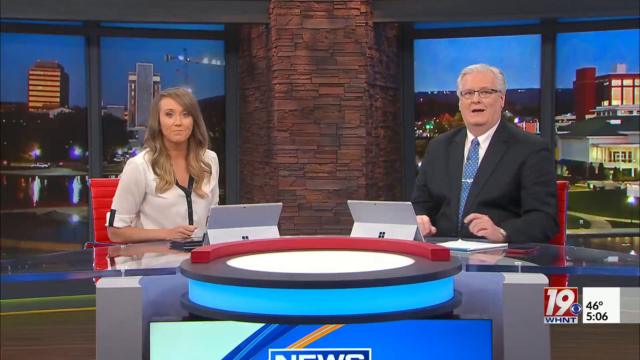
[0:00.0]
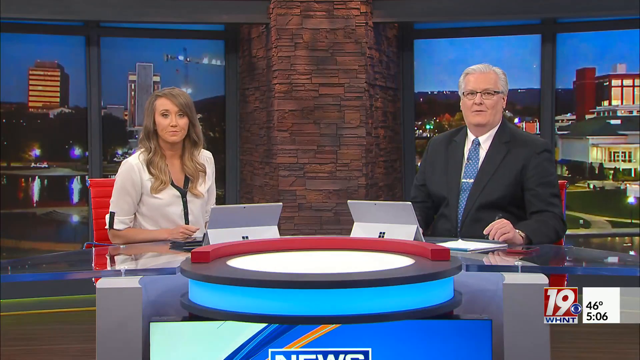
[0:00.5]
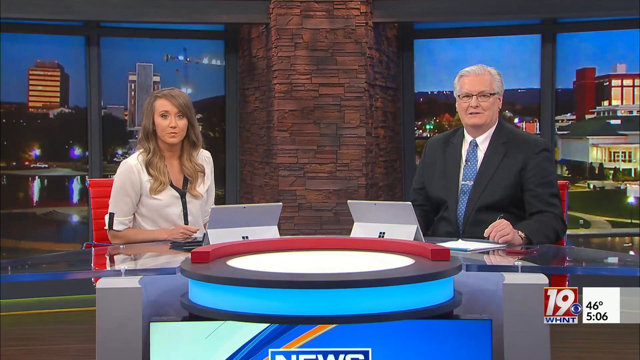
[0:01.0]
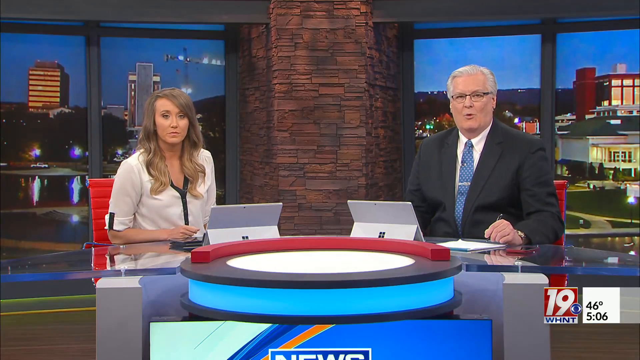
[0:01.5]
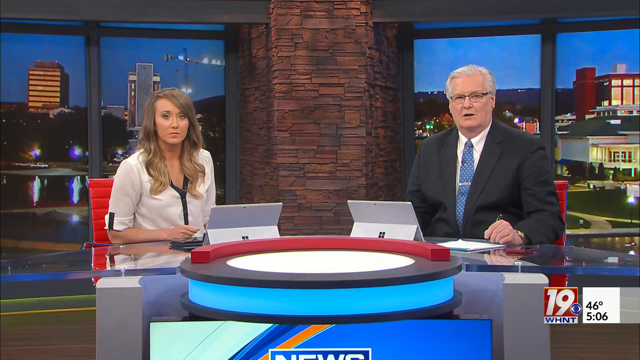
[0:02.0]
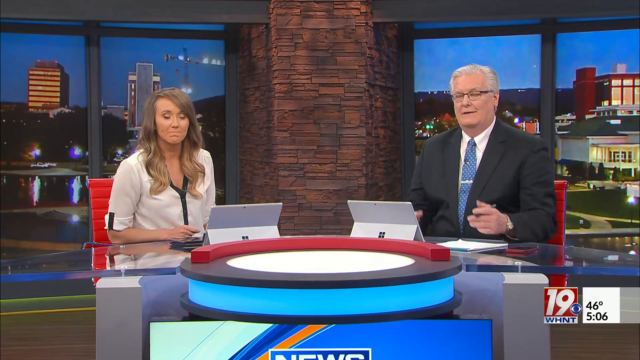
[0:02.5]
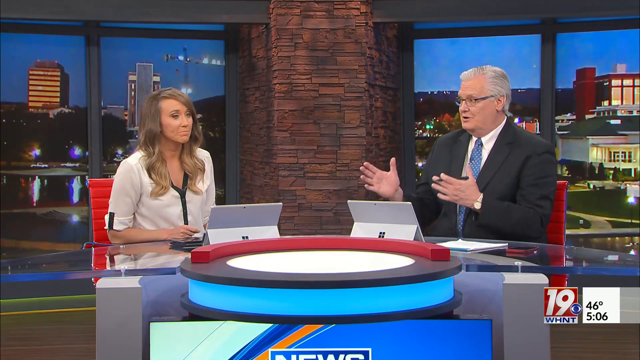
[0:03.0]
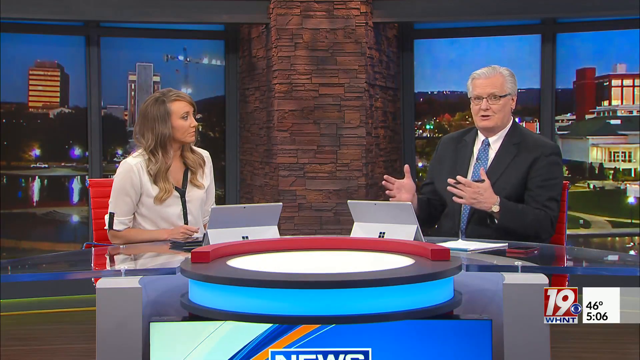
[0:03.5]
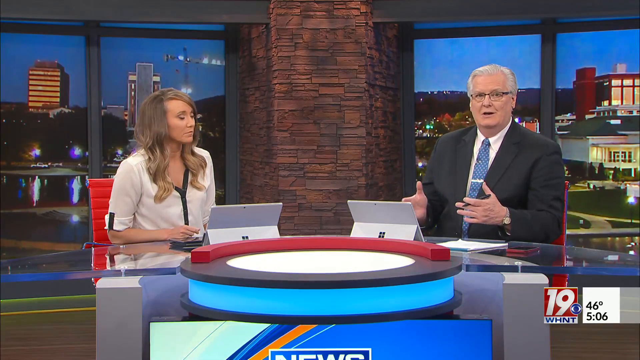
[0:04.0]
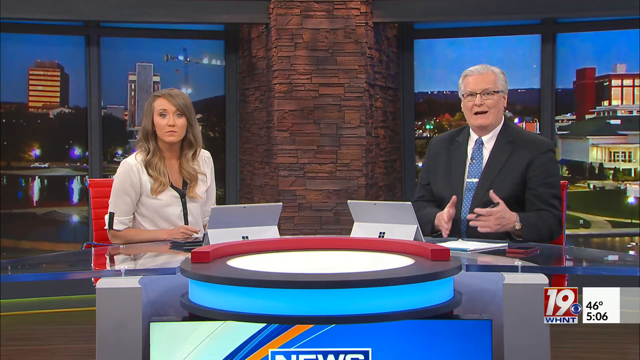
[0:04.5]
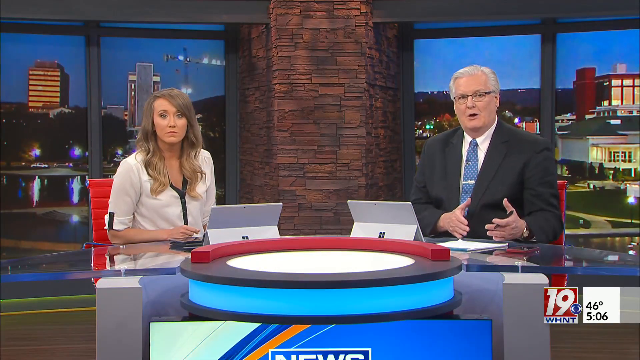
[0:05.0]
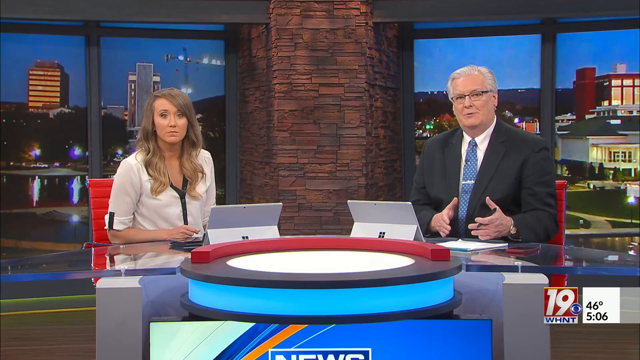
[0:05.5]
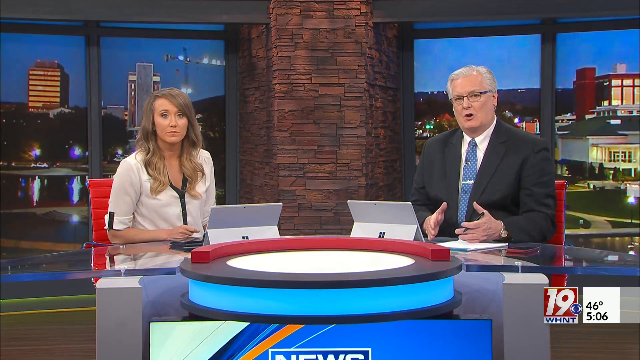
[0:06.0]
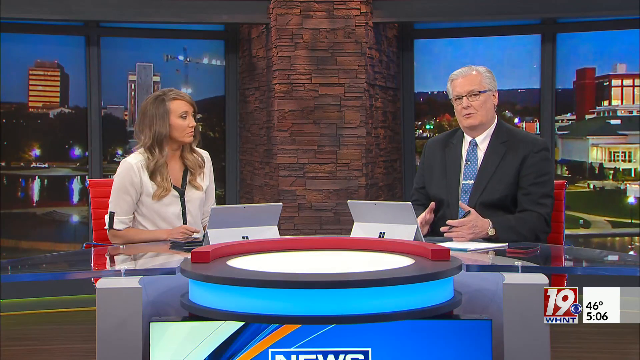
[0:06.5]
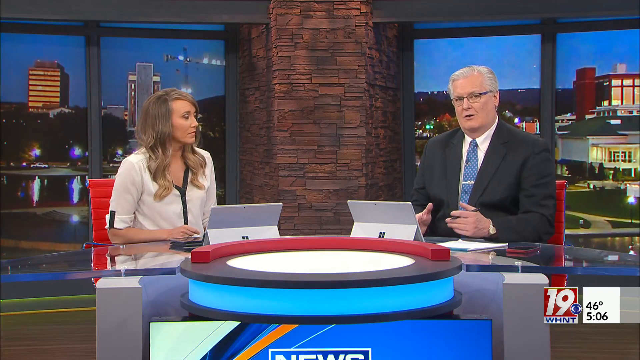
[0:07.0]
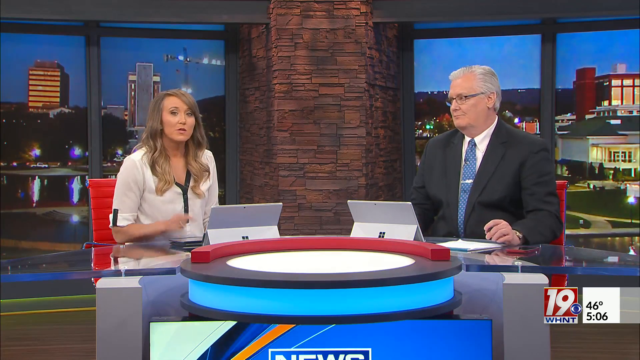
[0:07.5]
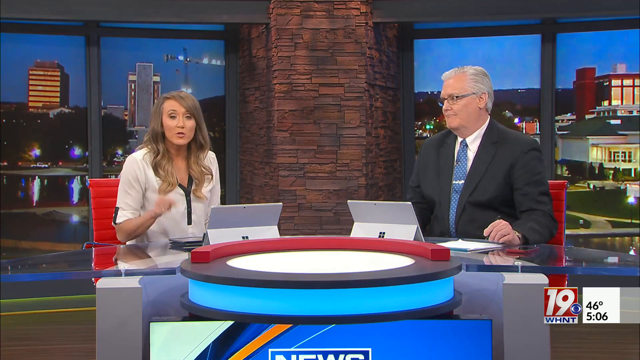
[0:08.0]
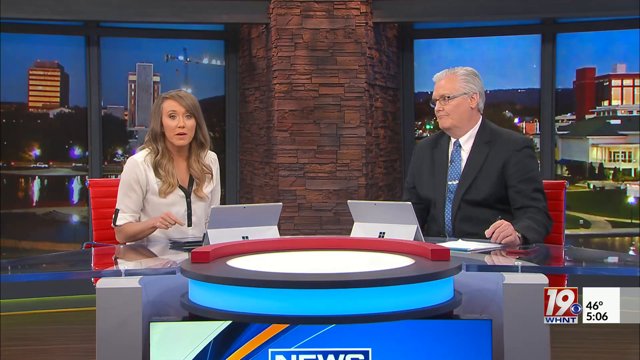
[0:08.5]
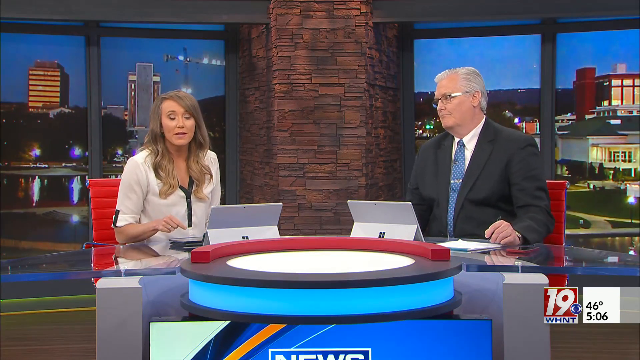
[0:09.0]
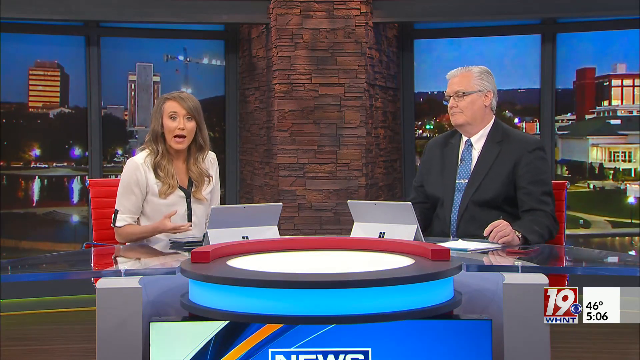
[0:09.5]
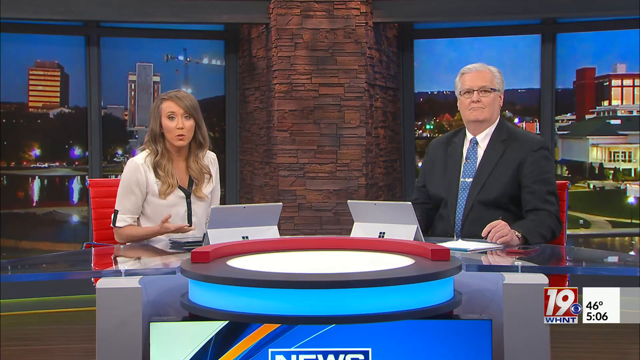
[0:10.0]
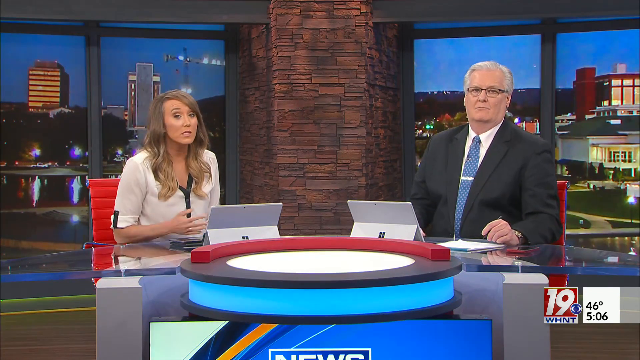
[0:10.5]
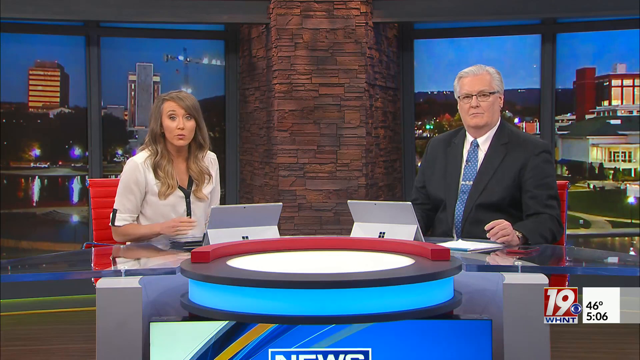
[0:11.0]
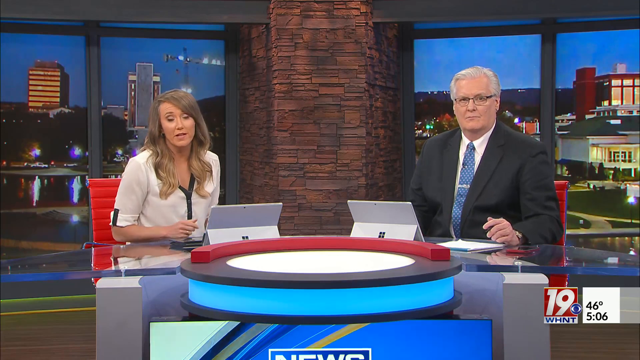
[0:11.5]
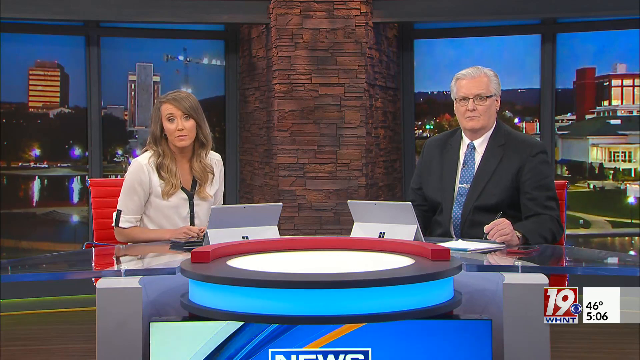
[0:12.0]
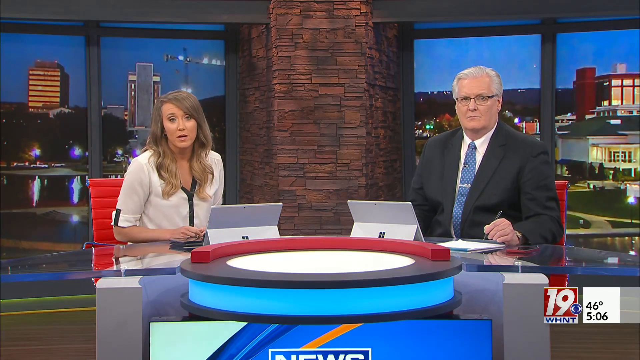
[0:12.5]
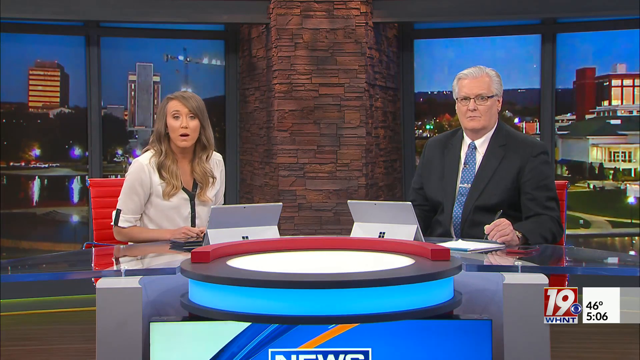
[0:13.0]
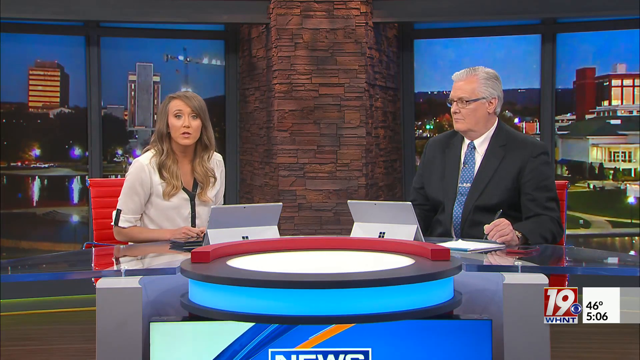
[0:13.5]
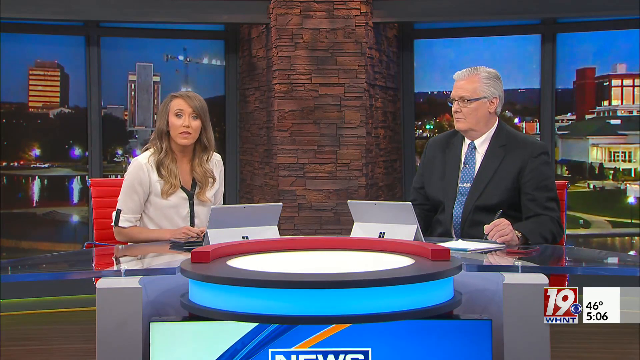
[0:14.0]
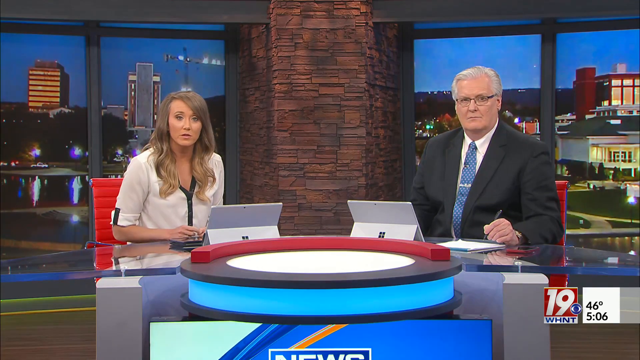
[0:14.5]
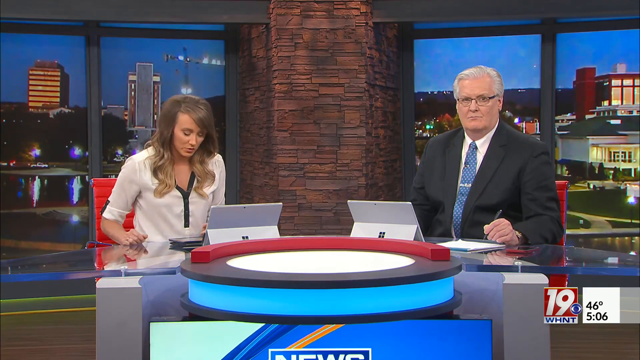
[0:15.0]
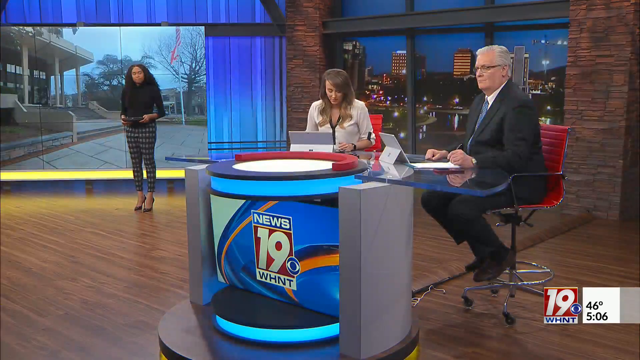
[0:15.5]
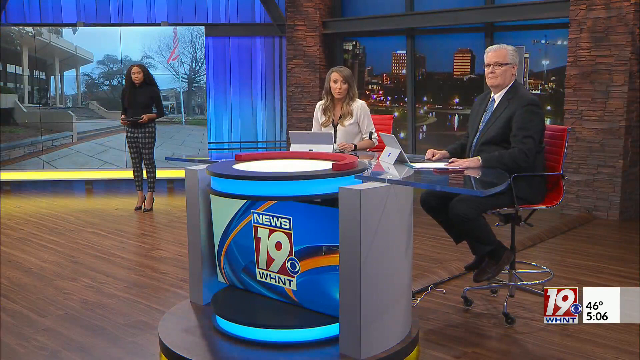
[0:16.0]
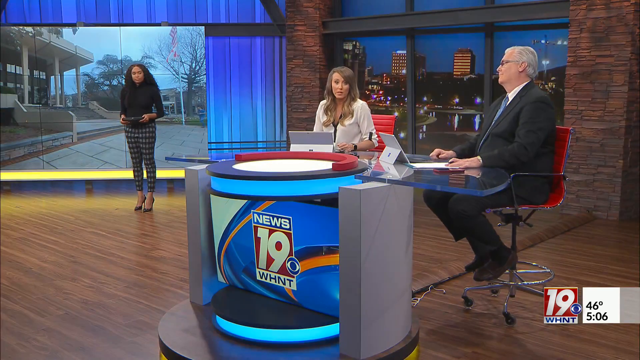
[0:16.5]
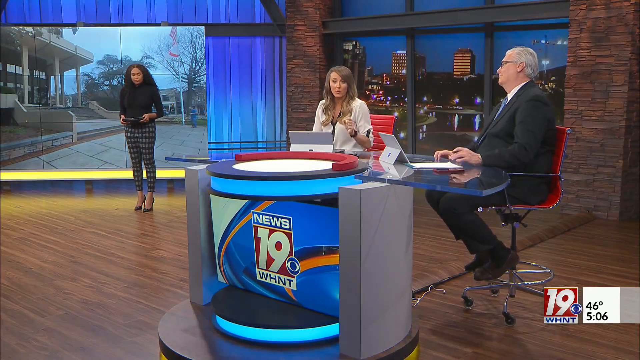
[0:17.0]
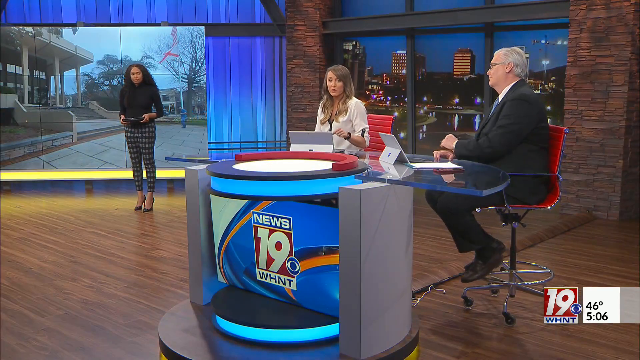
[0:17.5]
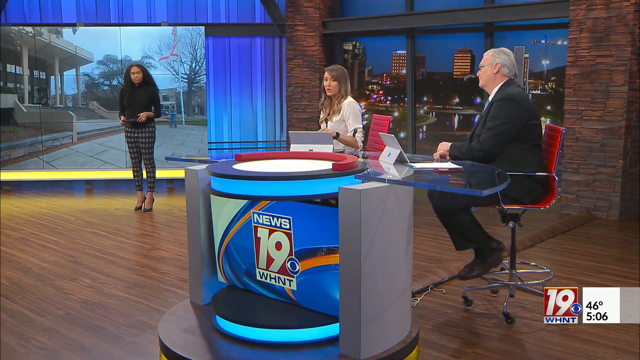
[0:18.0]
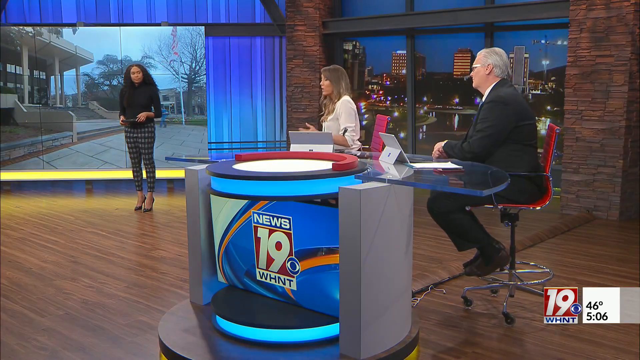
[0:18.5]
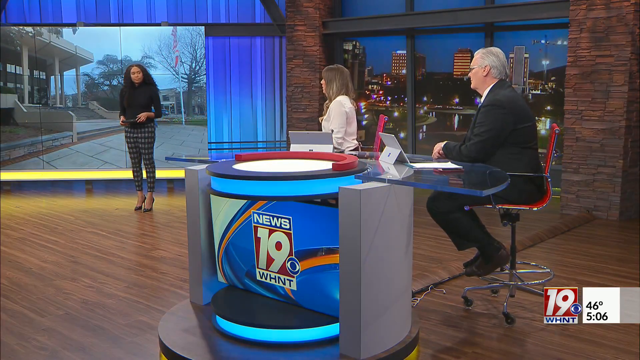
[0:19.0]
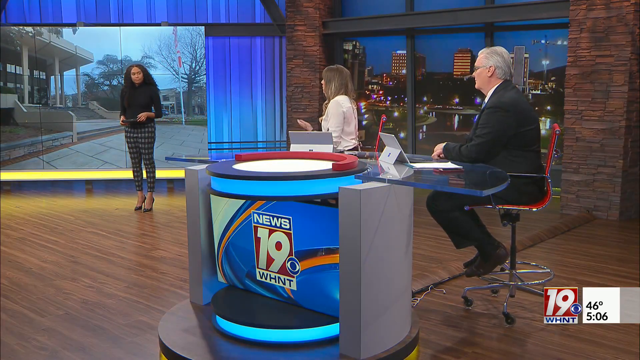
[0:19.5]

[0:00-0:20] The scene is a newsroom. In the bottom left corner the screen shows "19", a temperature of 46 degrees and the time 5:06. On the left is a woman in a white shirt, and on the right is a man in a dark-colored suit, white shirt and blue-and-white polka dot tie. The man talks, and then the woman starts talking. In the background is a city landscape with cars driving around and houses. The view then shifts to a far shot showing another reporter standing to the left at a monitor. Behind her is some type of building, possibly a school, and to the right is a flagpole with the American flag. This reporter wears black heels, black and white pants and a black shirt, and she has dark curly hair. The shot ends before she begins to talk.